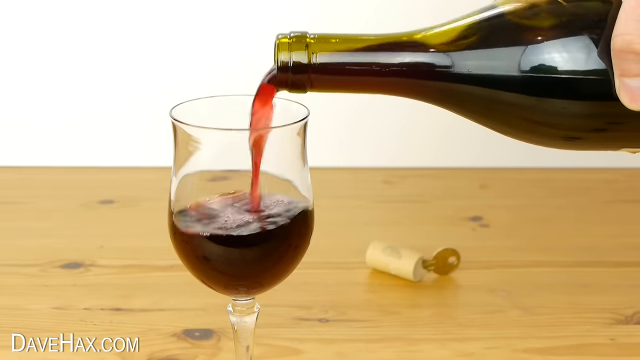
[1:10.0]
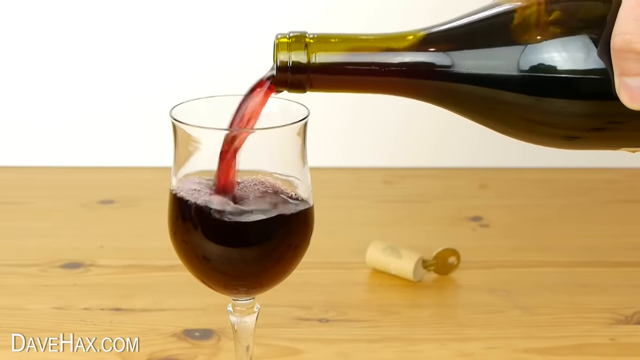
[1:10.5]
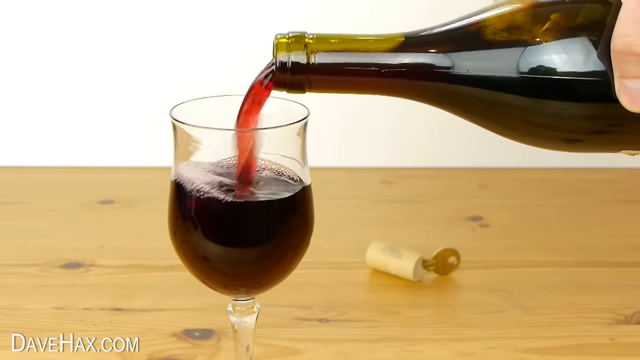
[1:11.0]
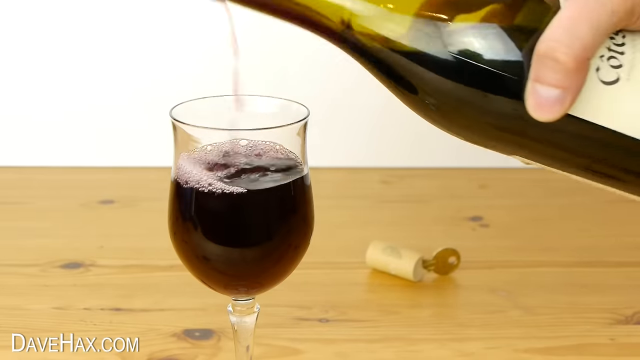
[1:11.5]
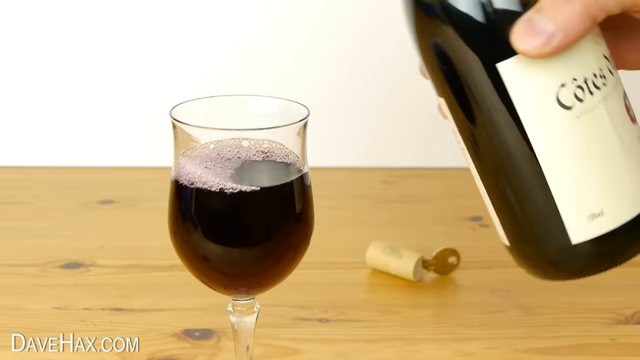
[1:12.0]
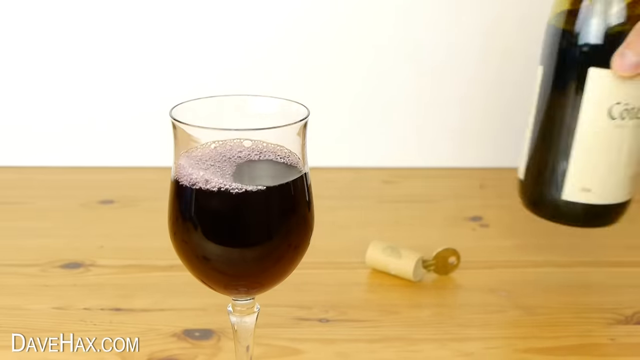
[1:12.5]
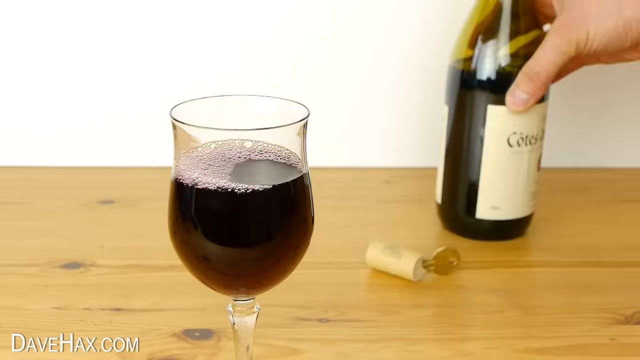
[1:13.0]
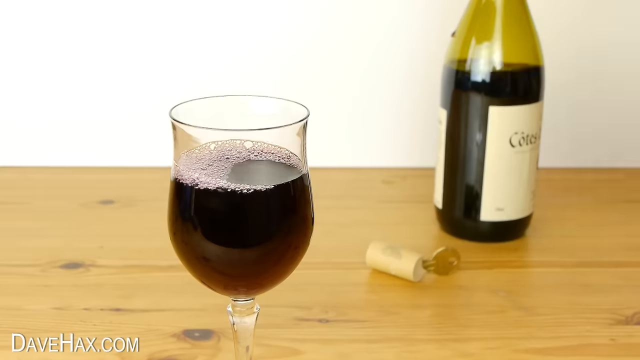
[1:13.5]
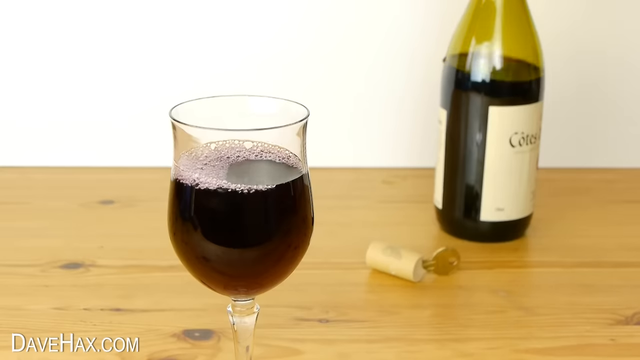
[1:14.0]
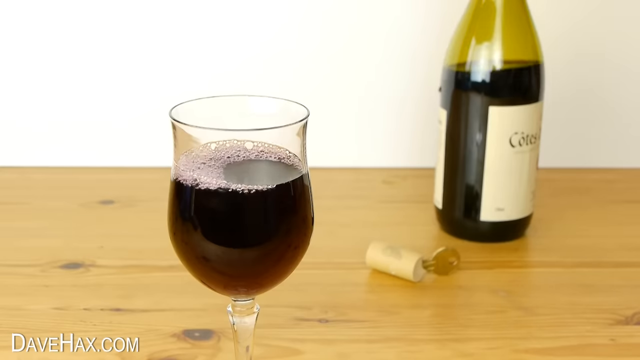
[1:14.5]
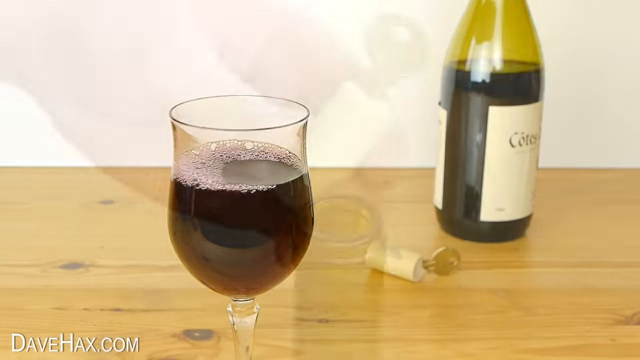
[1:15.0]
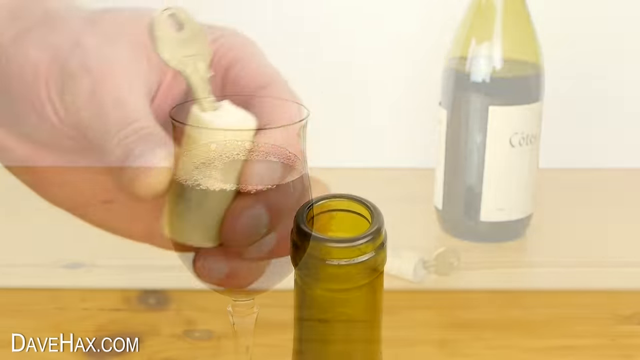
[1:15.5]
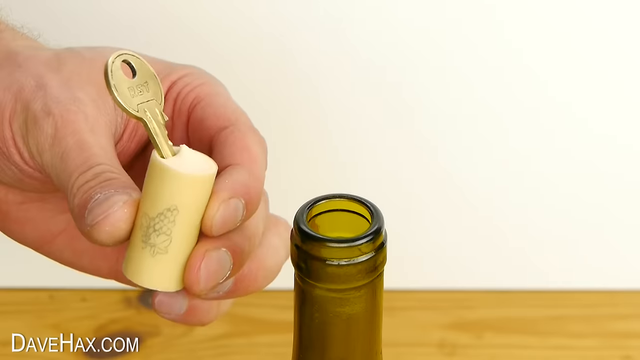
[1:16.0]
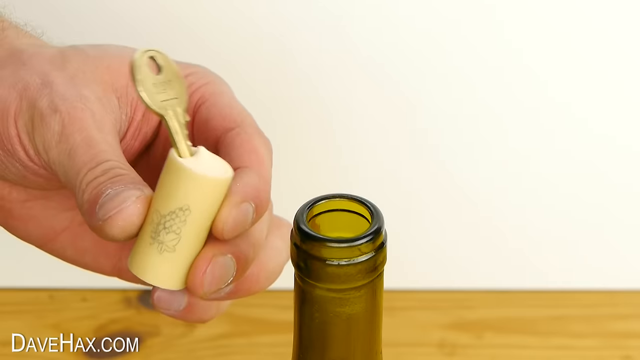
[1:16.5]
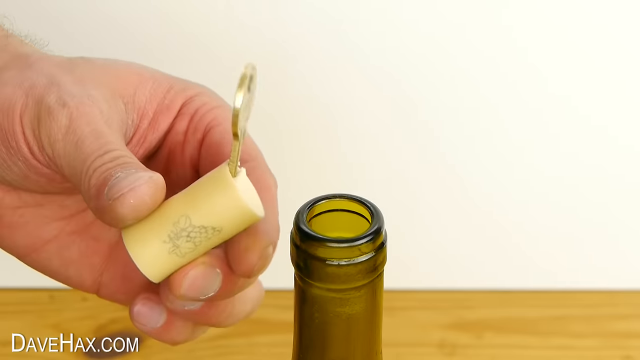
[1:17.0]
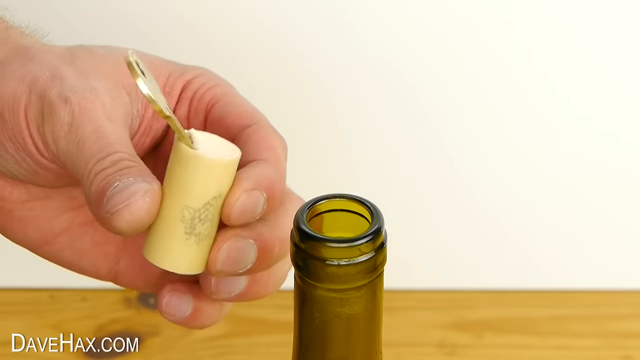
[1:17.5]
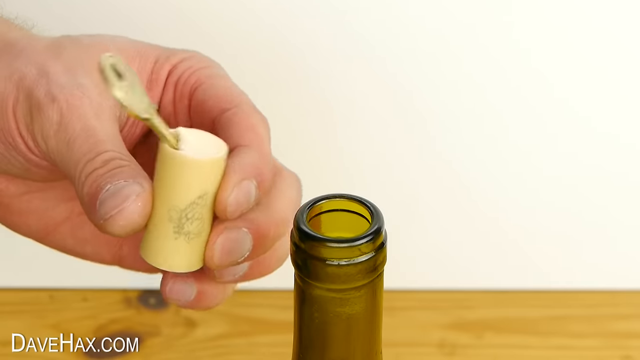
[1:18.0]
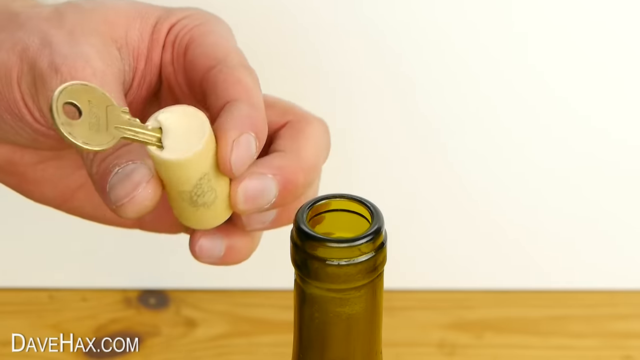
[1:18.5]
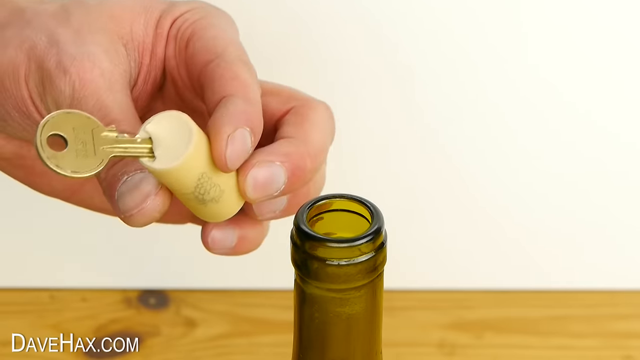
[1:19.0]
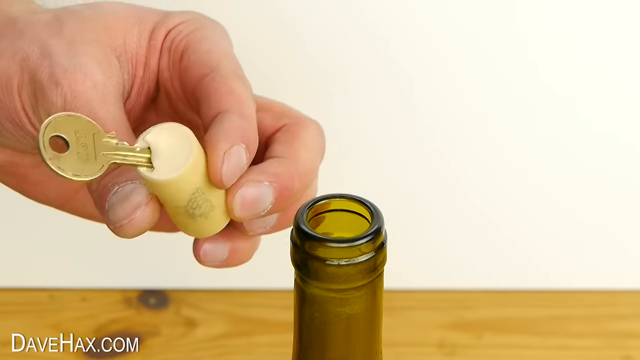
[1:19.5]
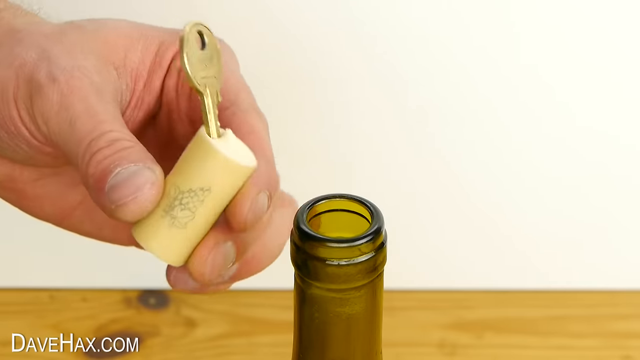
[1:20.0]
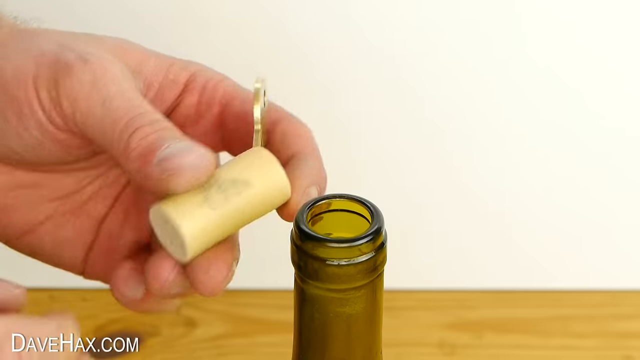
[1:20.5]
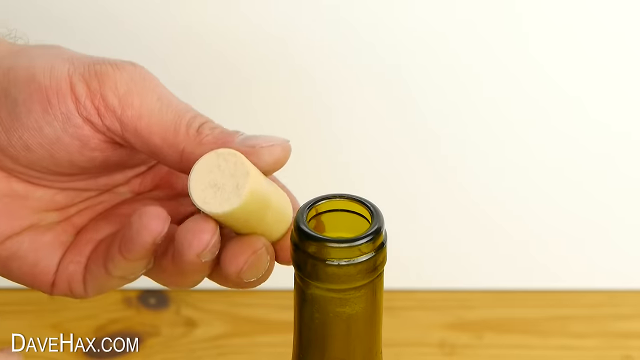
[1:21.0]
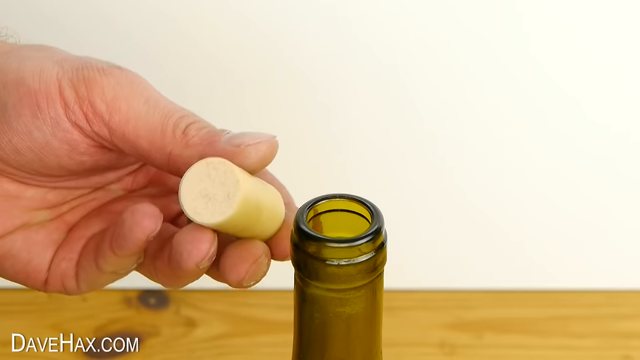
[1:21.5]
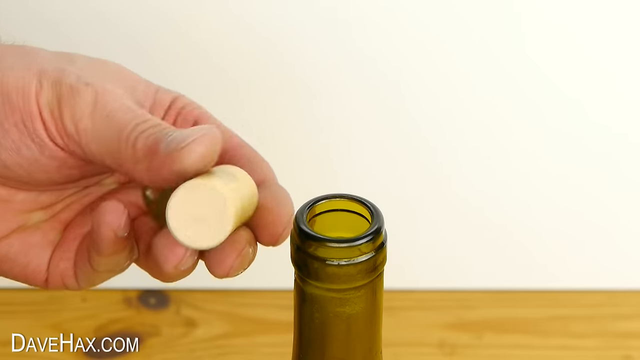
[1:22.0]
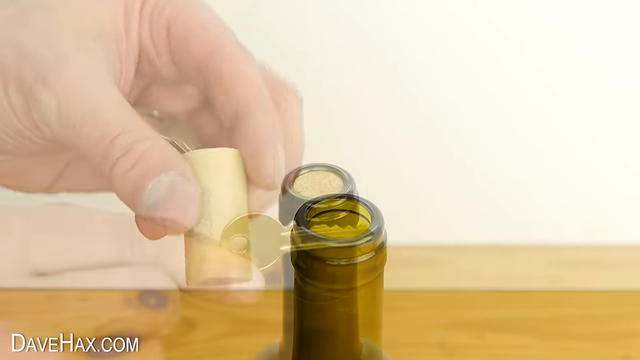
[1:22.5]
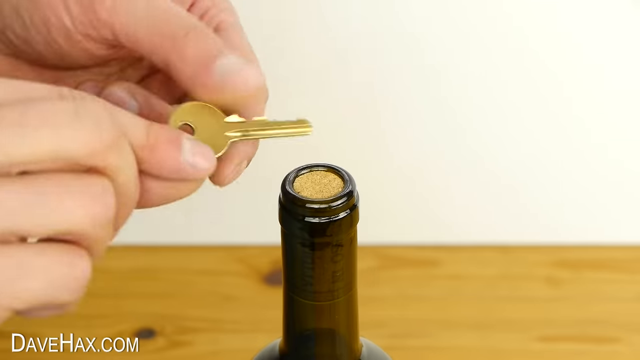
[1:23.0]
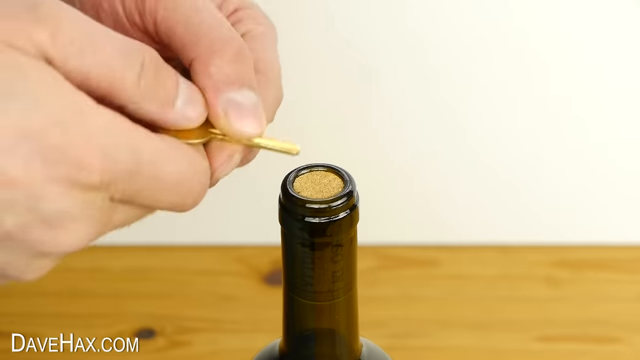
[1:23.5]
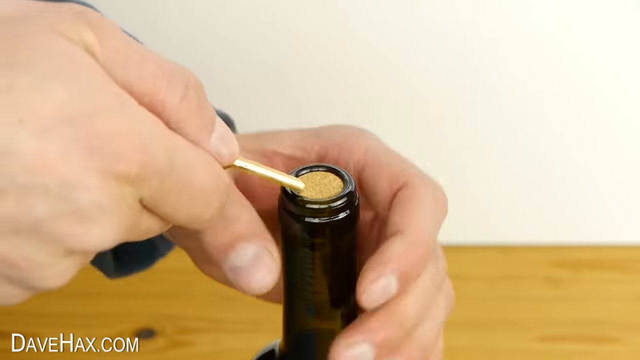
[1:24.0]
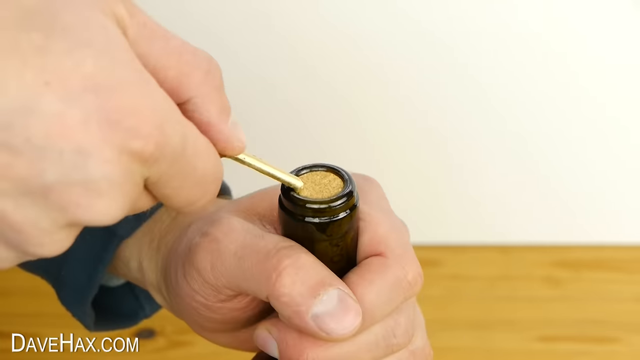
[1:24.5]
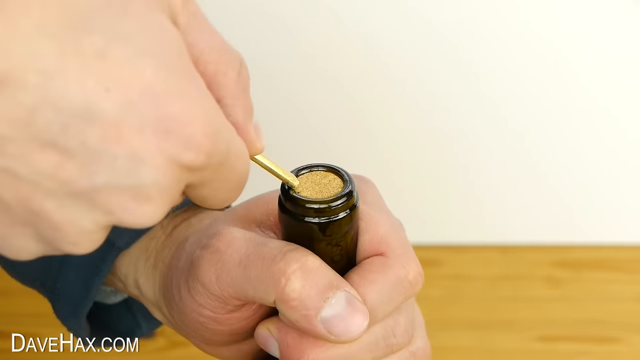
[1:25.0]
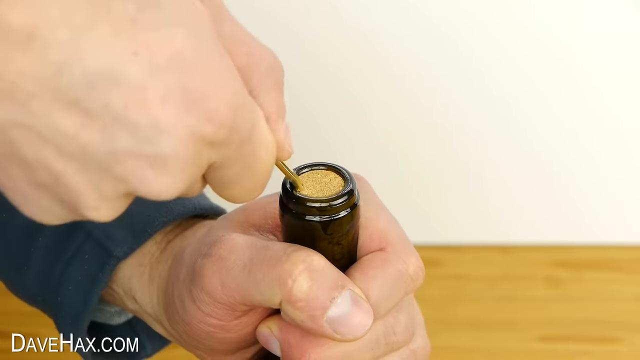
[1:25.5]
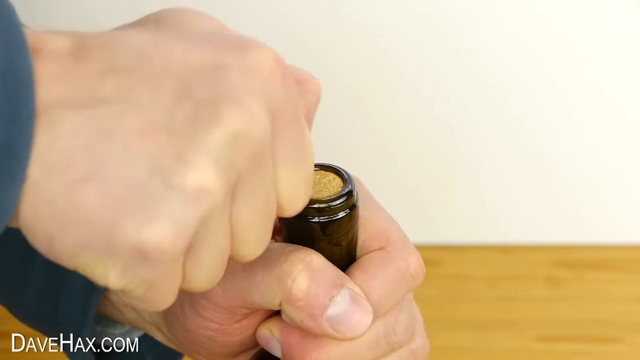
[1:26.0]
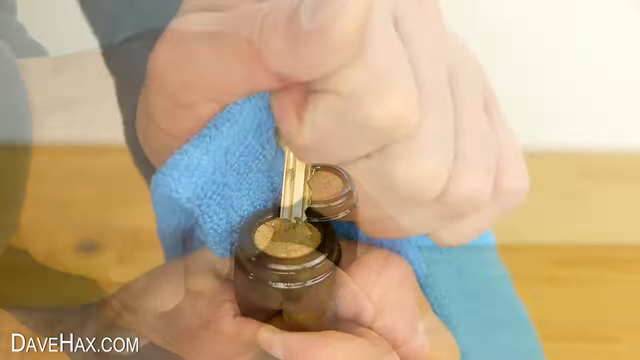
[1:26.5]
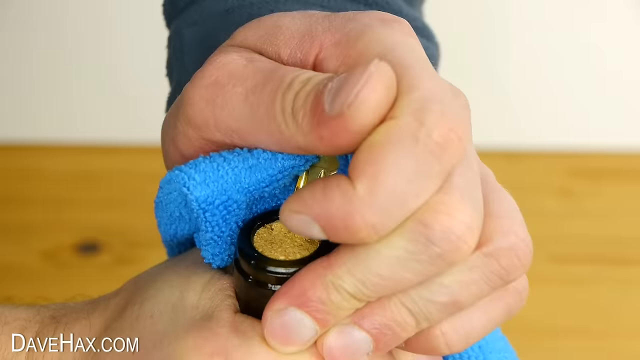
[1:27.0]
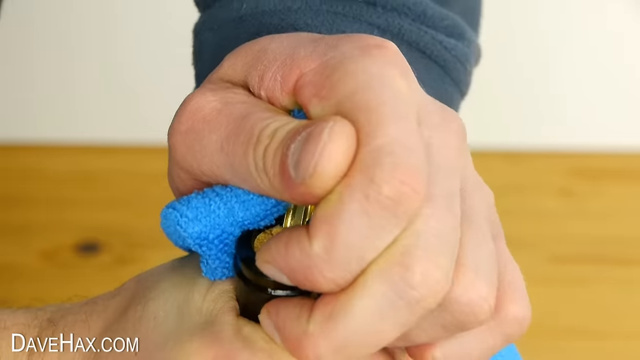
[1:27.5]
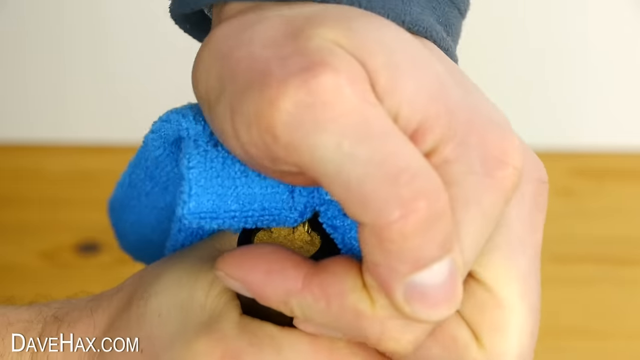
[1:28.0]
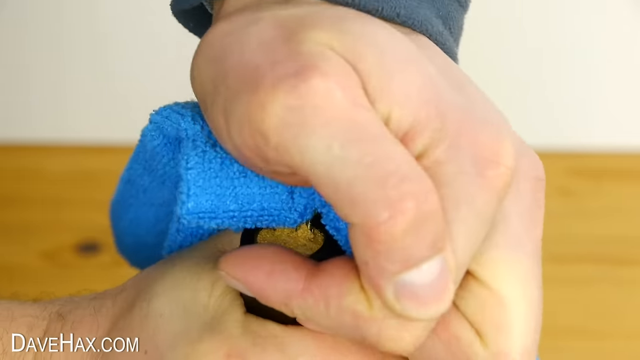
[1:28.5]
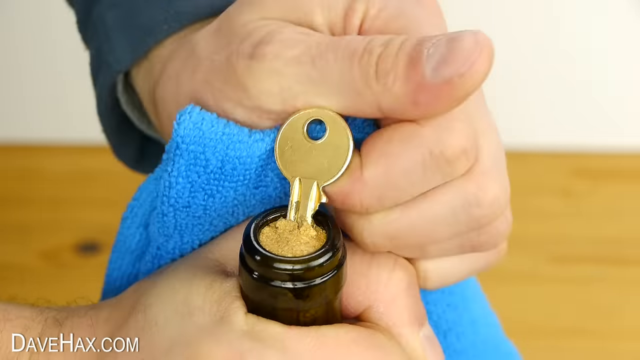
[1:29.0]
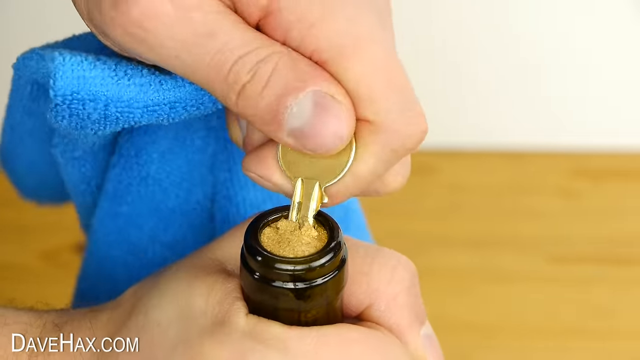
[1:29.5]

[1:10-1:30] He pours the glass of wine about two-thirds to three-quarters full, then shows the cork with the key still in it. The video then seems to start over with a very fast recap of what he did. There are no messes.